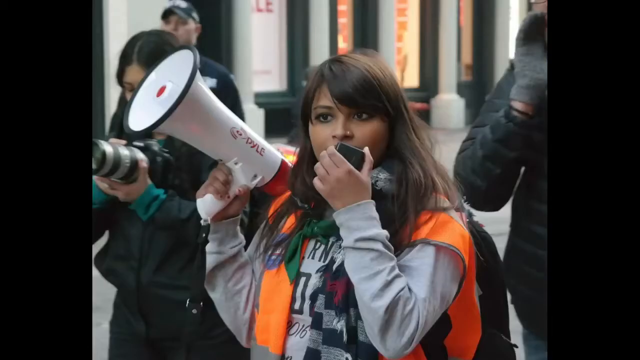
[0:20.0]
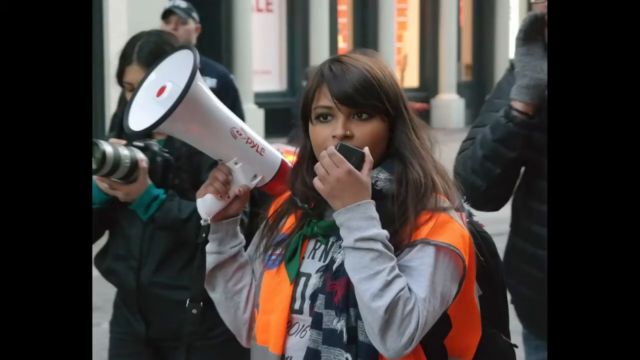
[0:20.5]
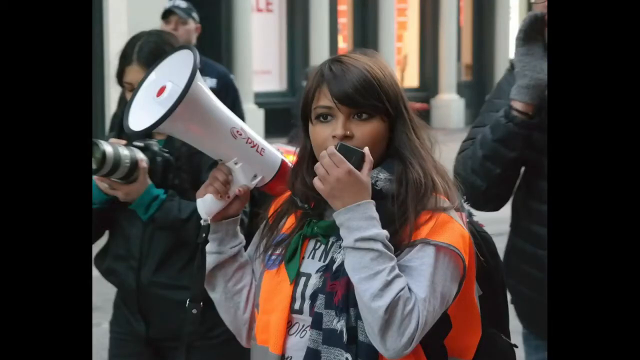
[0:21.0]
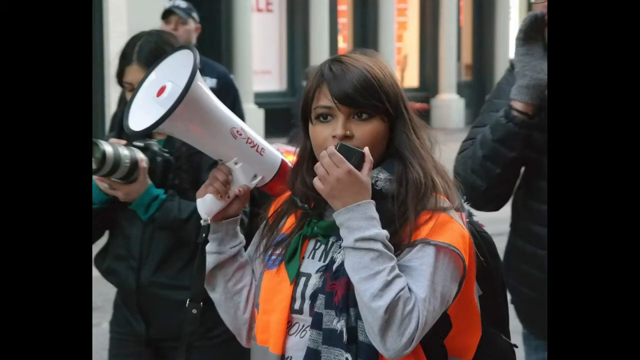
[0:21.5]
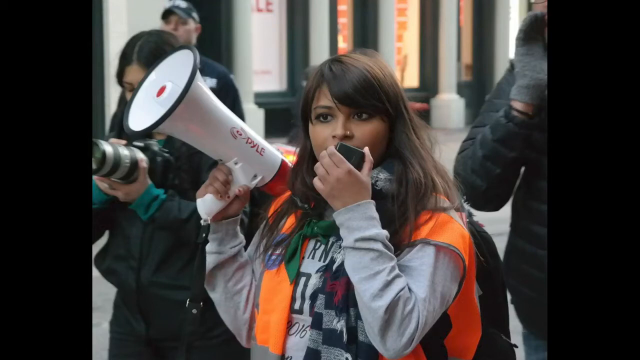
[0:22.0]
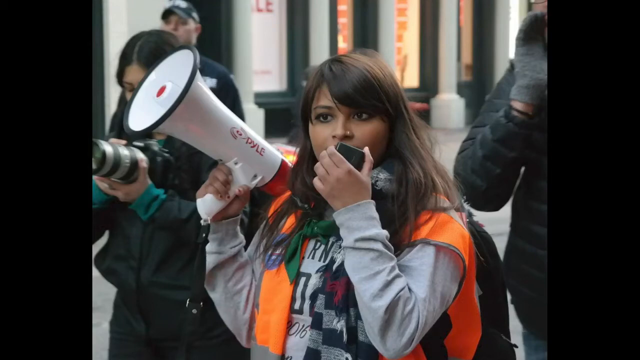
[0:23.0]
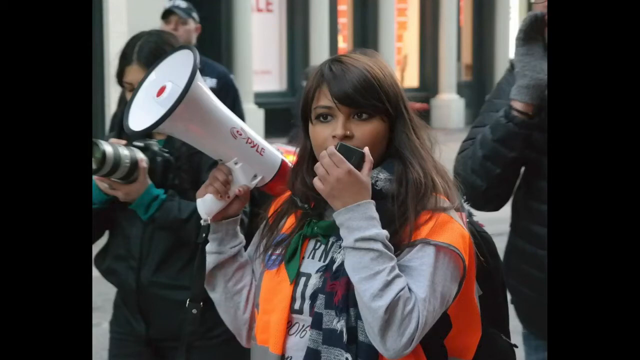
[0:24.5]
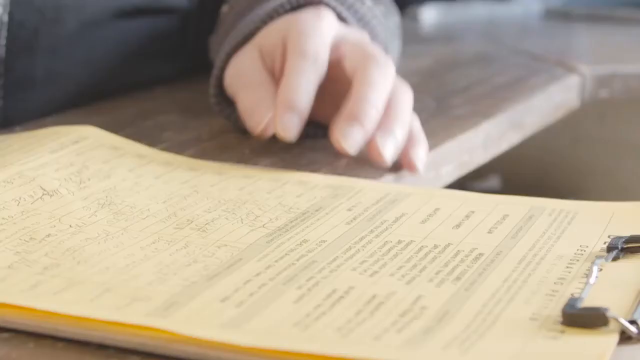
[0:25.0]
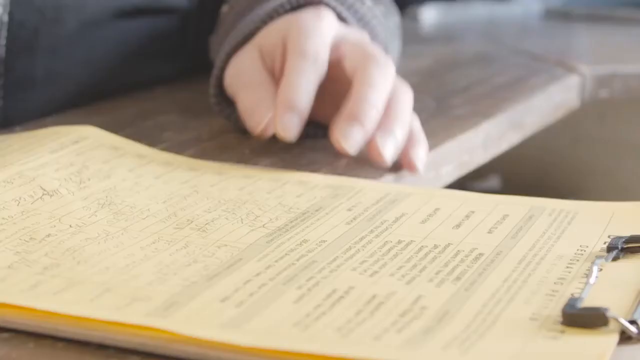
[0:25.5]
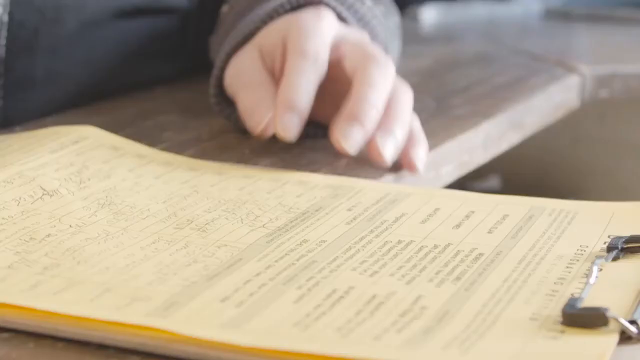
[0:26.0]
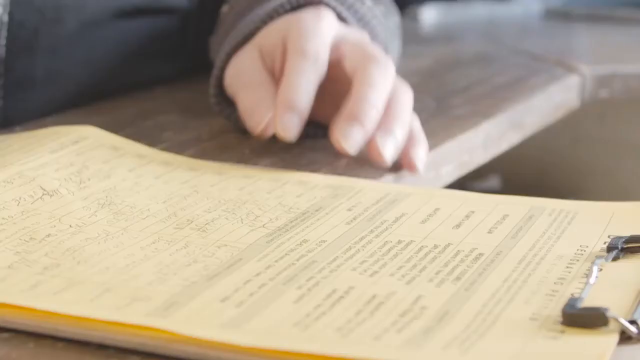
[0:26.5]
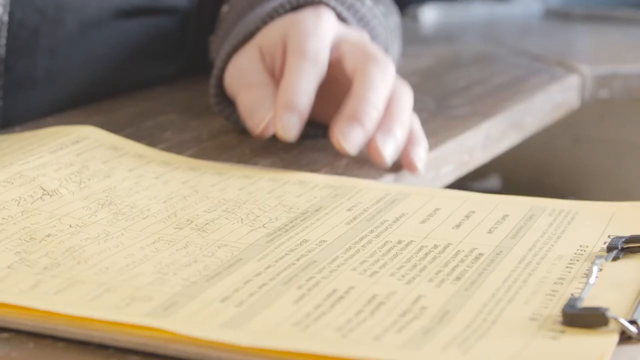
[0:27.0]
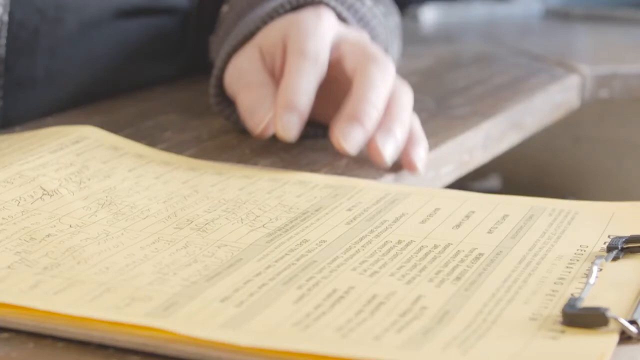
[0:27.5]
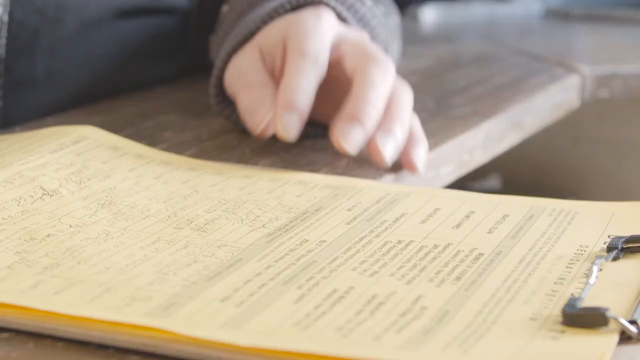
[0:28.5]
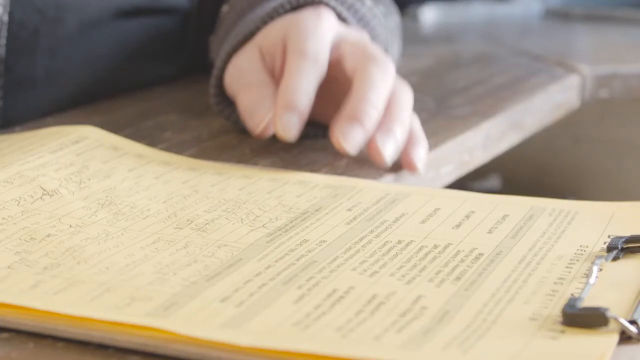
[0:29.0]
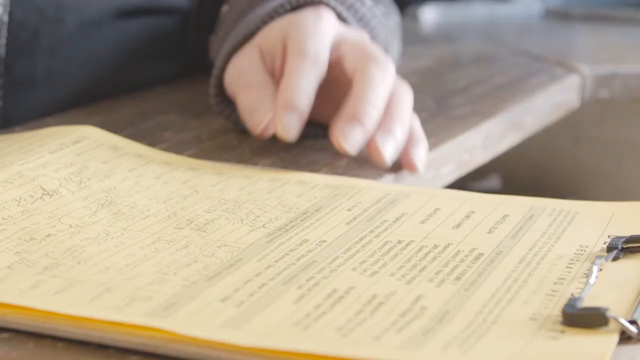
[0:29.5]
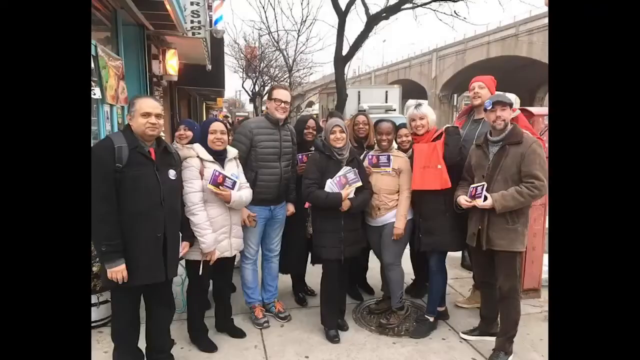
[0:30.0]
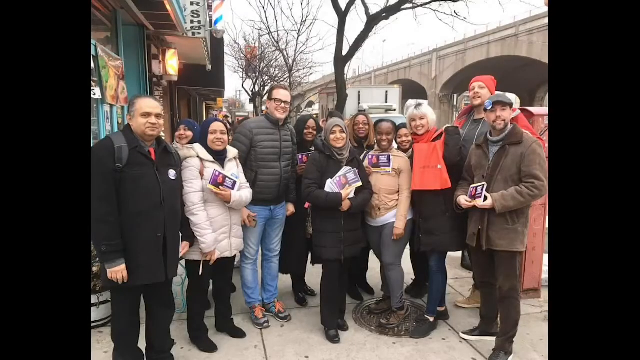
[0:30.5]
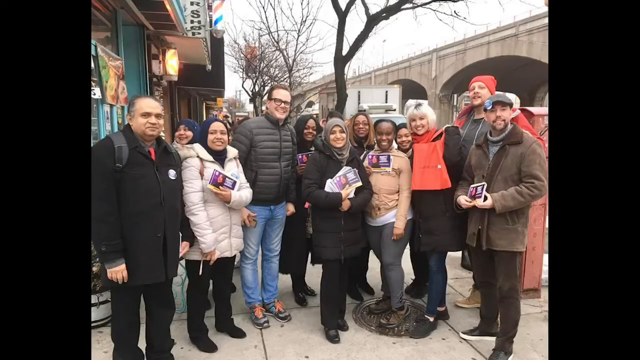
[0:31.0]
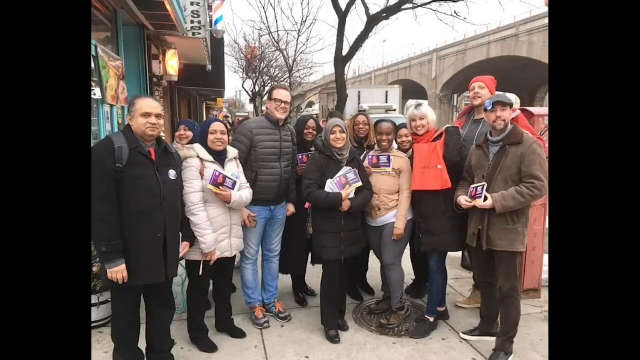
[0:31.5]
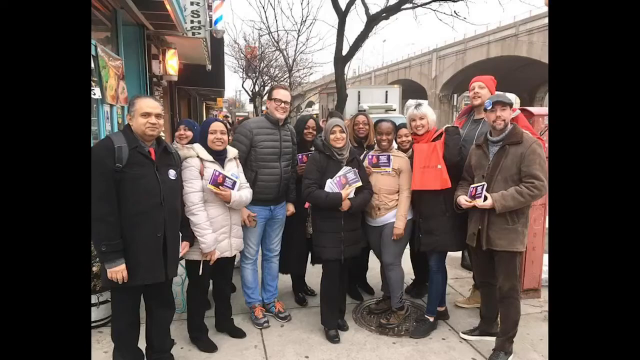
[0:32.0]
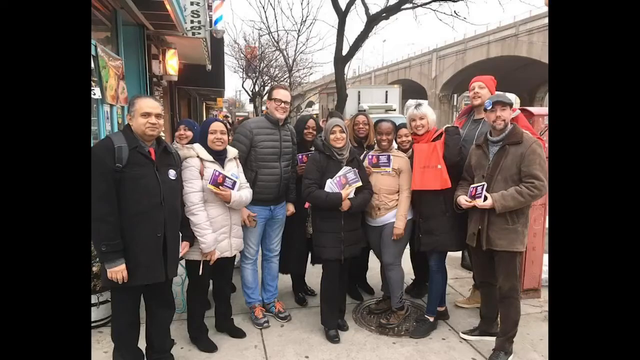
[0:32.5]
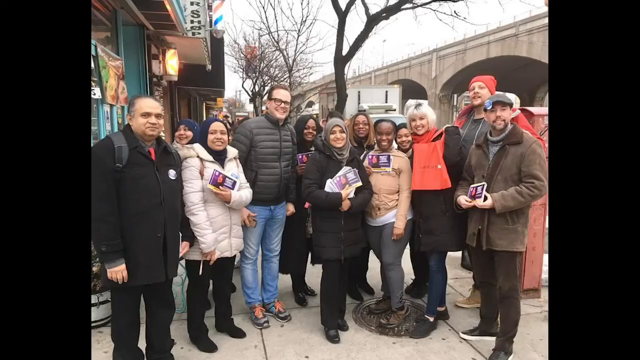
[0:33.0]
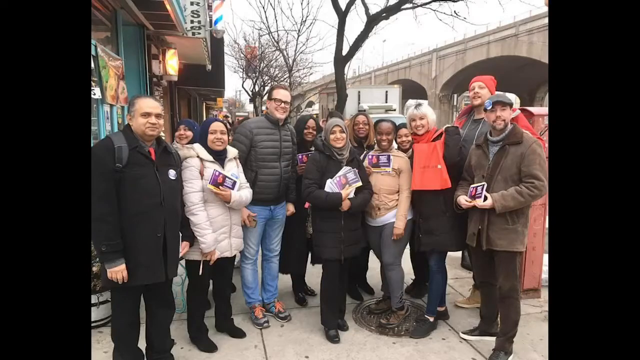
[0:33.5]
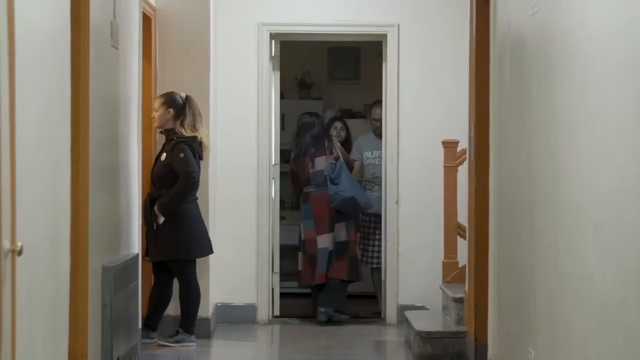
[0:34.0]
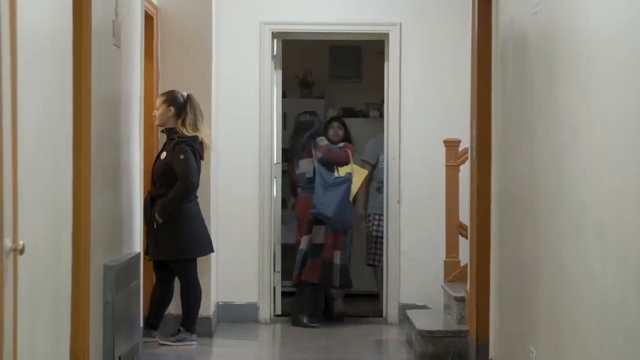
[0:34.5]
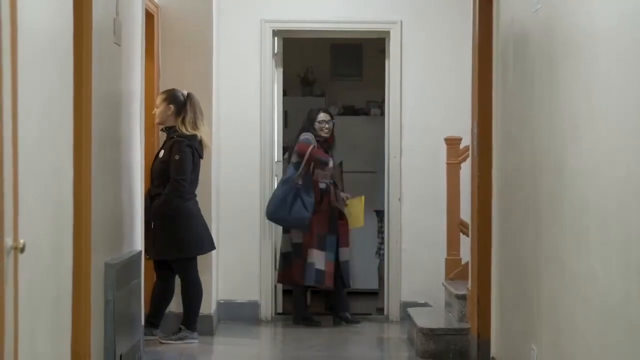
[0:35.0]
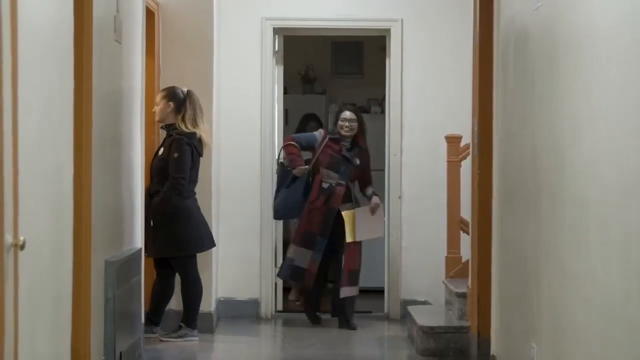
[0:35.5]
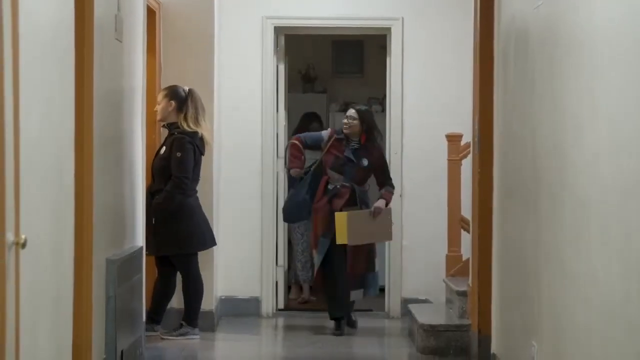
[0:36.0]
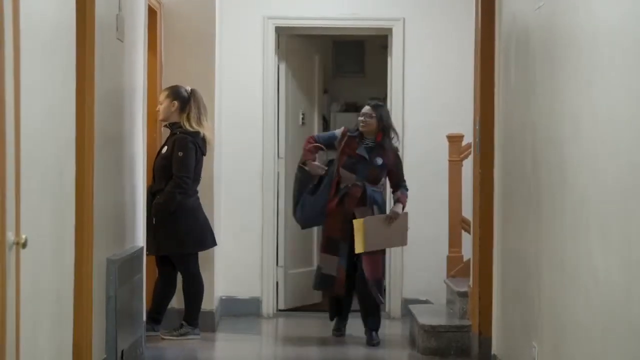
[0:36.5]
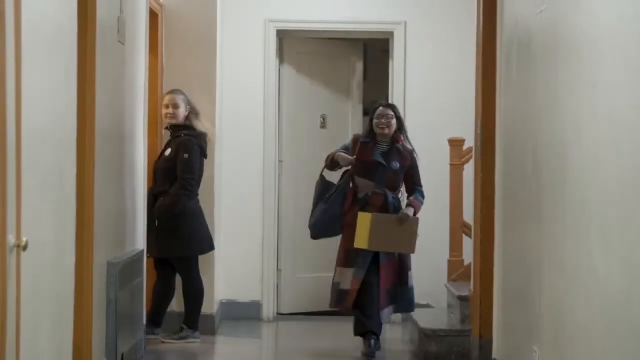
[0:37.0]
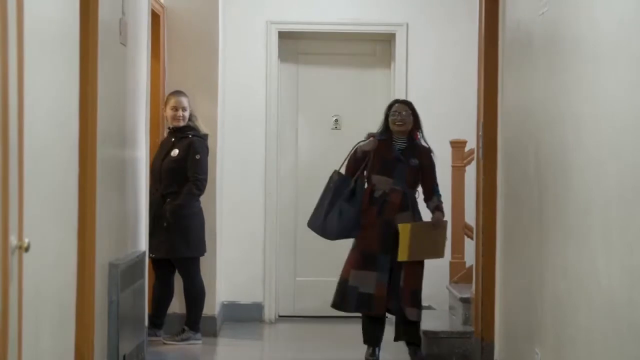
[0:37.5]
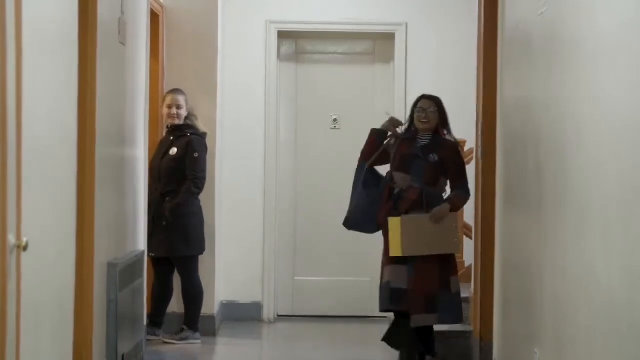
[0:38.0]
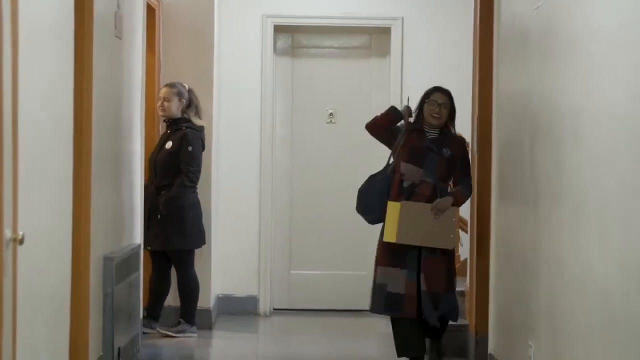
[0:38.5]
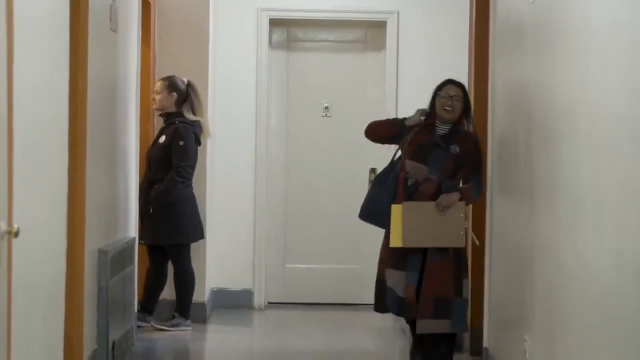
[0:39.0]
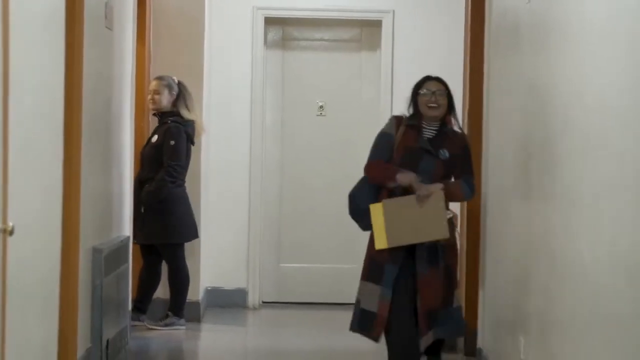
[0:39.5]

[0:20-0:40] Many people are present, apparently supporting the cause; there seem to be about 12 people, roughly four men and eight women. Mary is there in her hijab, other women wear white jackets, and the men interviewing are also present. Afterwards, she is seen leaving the office.